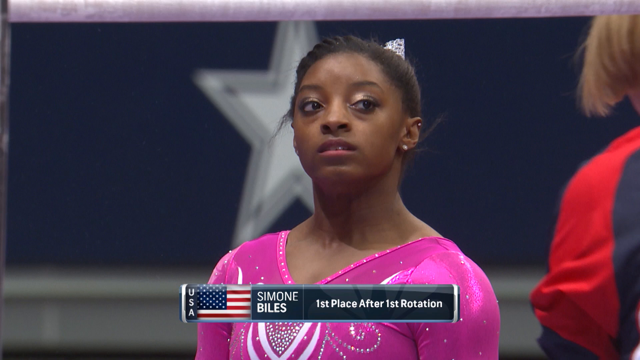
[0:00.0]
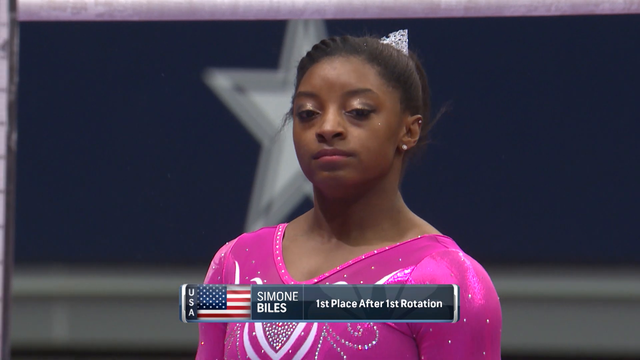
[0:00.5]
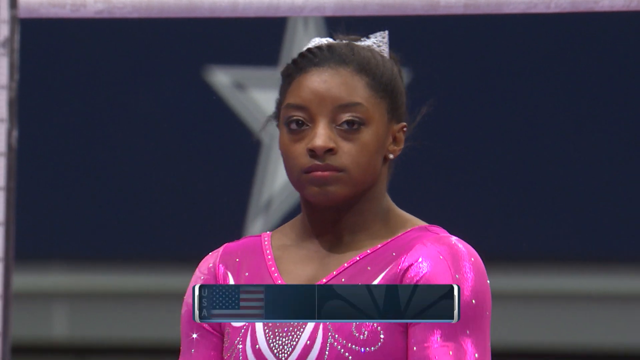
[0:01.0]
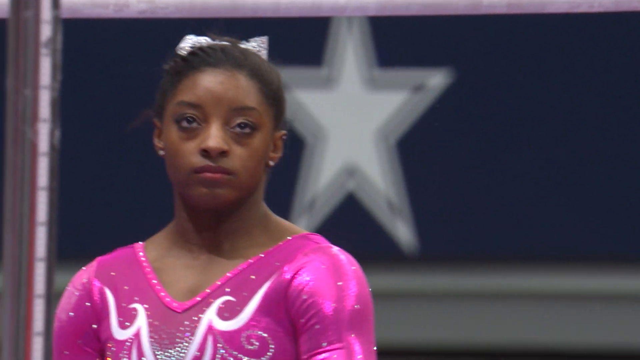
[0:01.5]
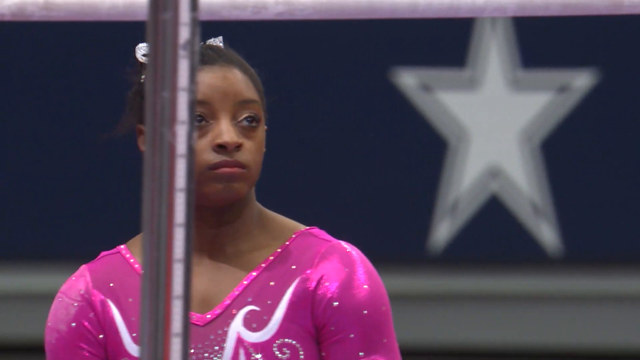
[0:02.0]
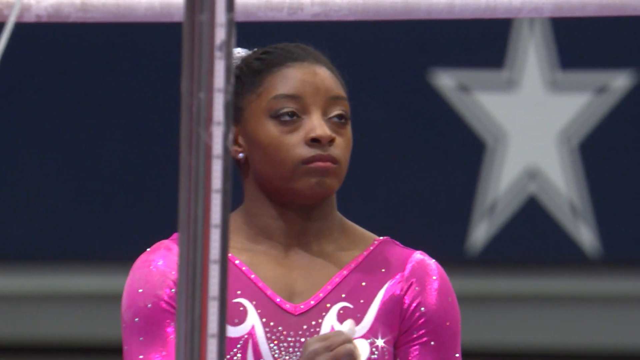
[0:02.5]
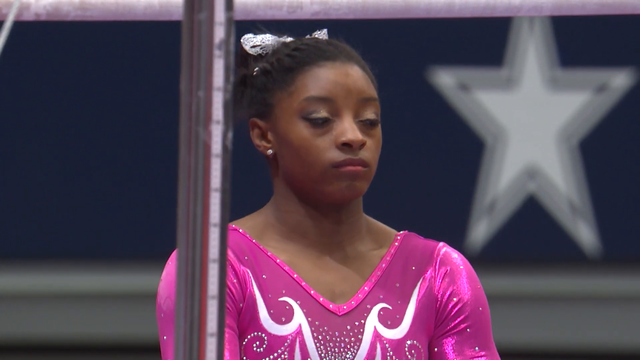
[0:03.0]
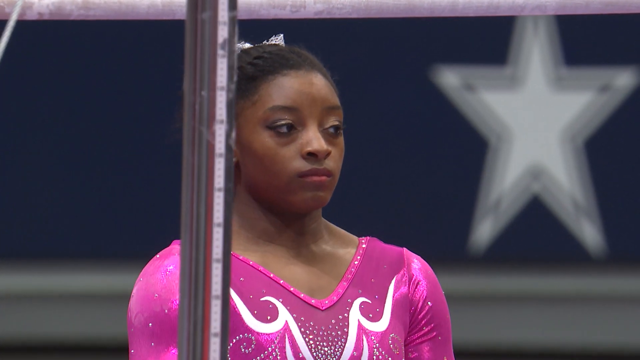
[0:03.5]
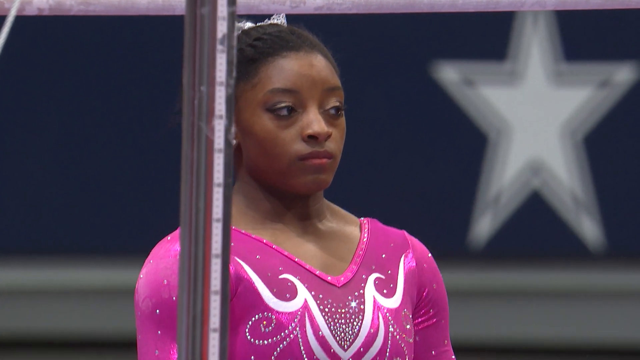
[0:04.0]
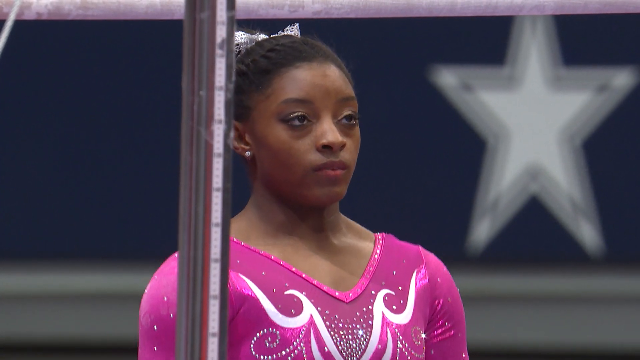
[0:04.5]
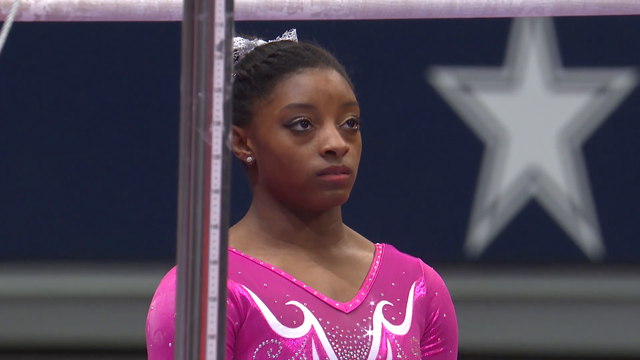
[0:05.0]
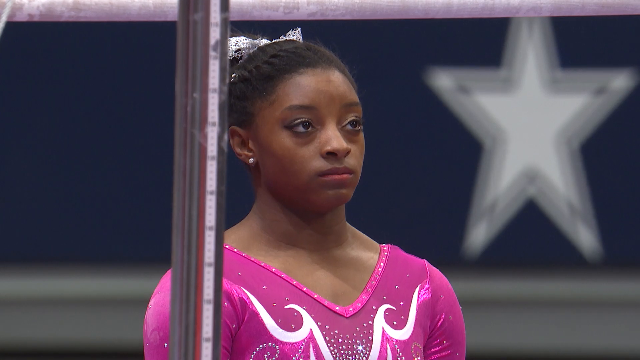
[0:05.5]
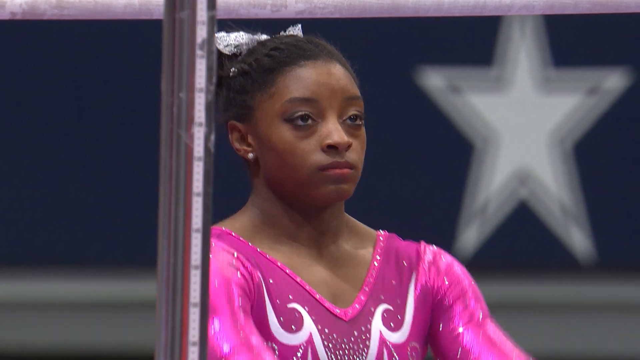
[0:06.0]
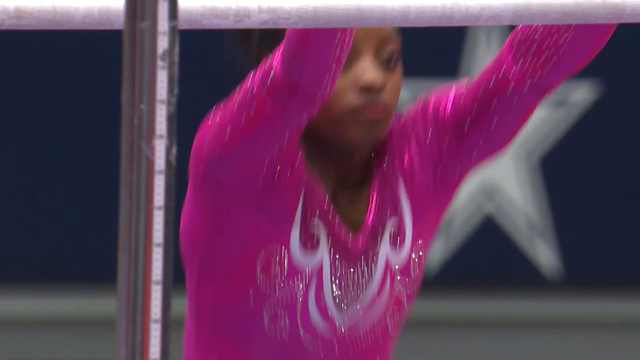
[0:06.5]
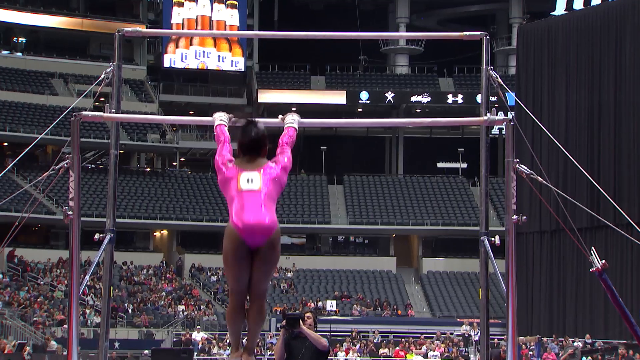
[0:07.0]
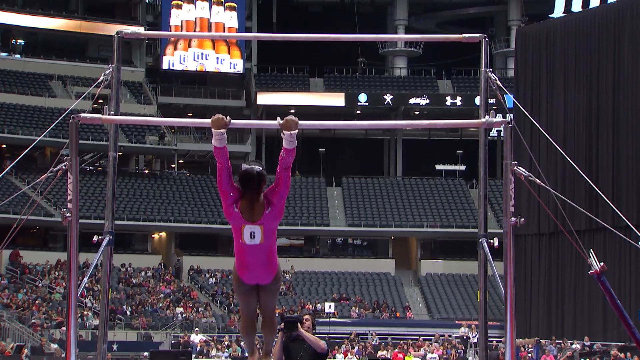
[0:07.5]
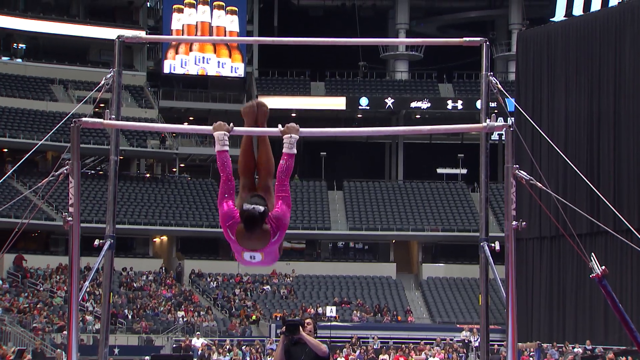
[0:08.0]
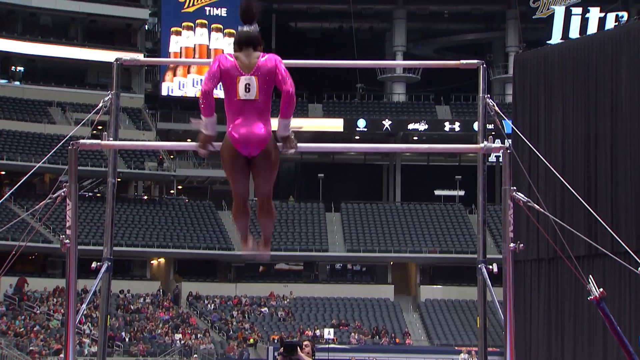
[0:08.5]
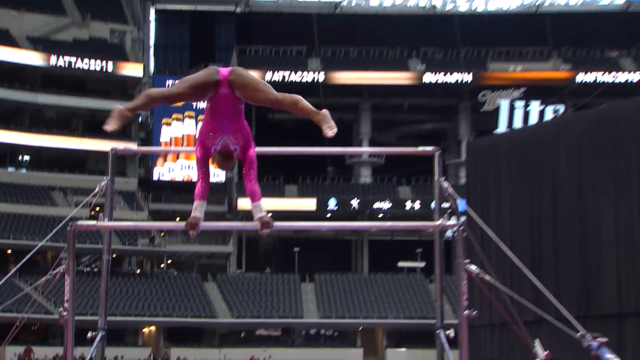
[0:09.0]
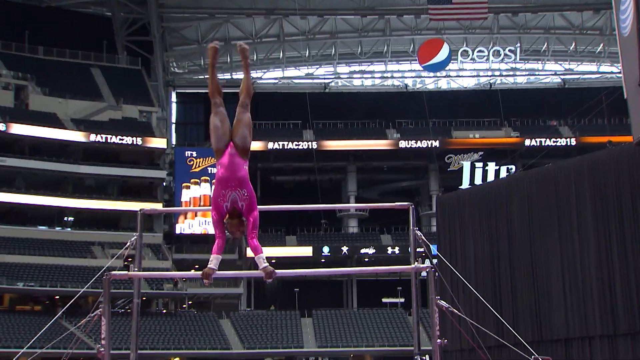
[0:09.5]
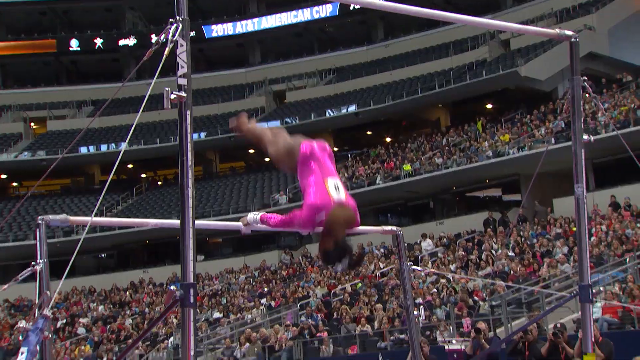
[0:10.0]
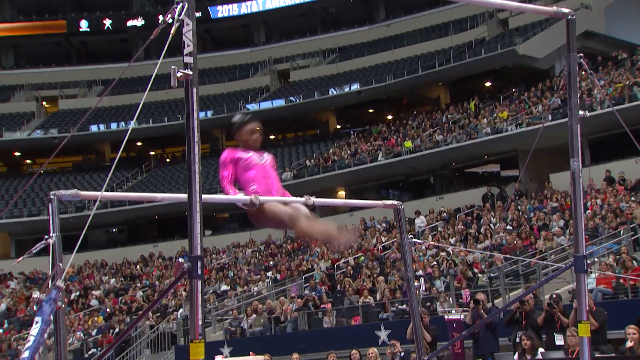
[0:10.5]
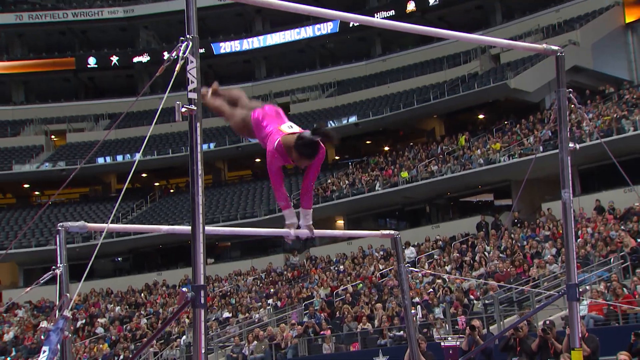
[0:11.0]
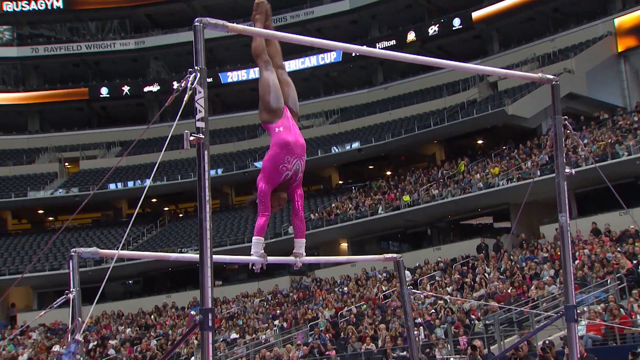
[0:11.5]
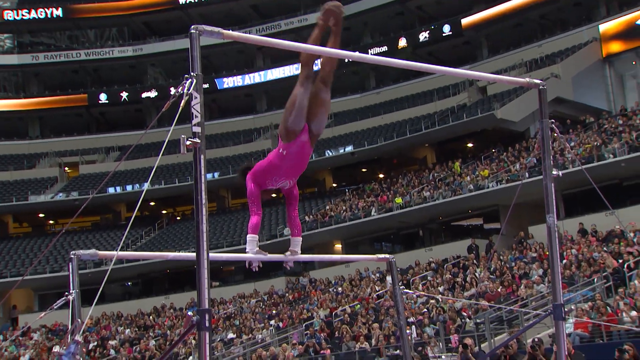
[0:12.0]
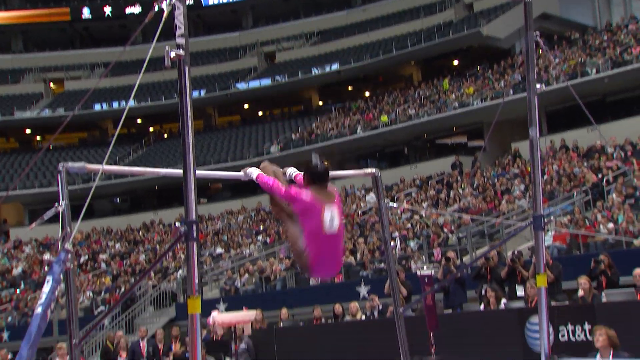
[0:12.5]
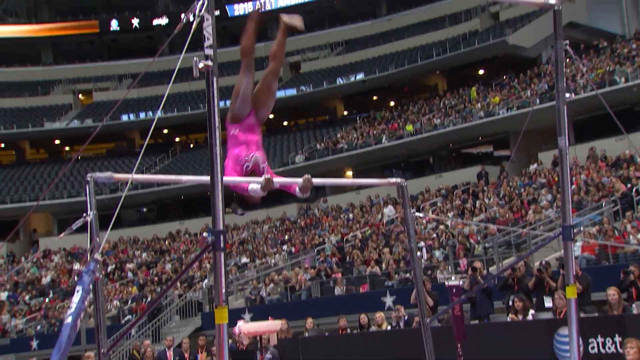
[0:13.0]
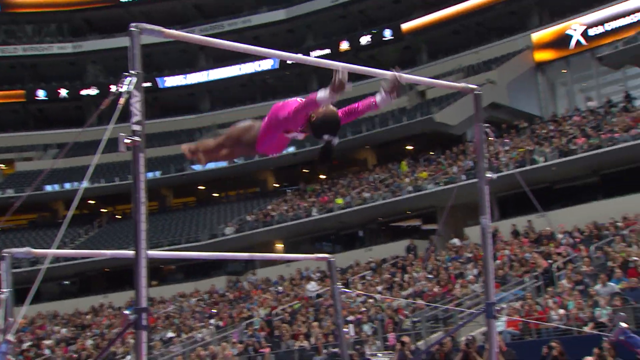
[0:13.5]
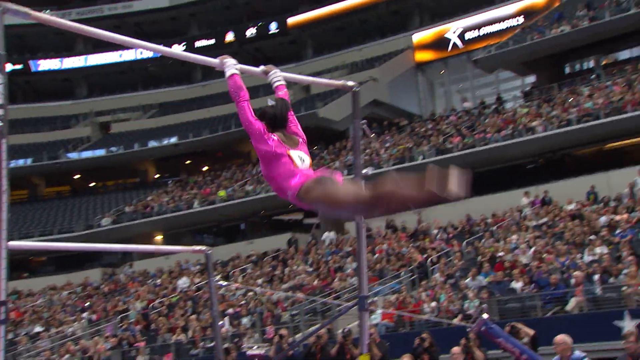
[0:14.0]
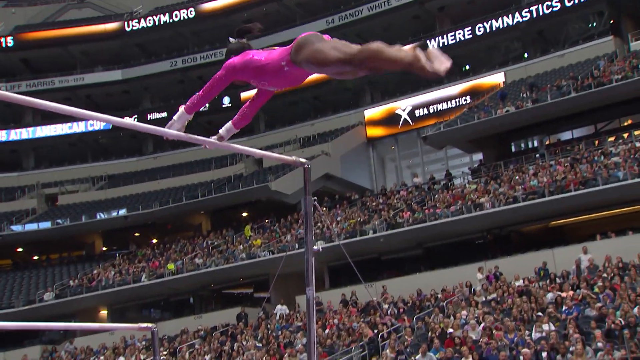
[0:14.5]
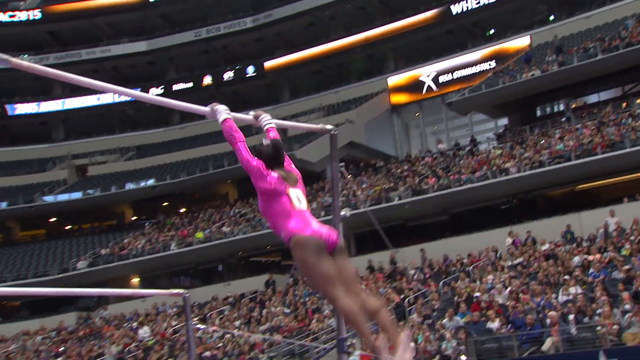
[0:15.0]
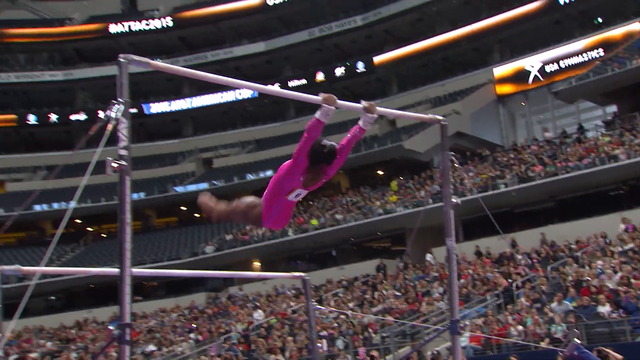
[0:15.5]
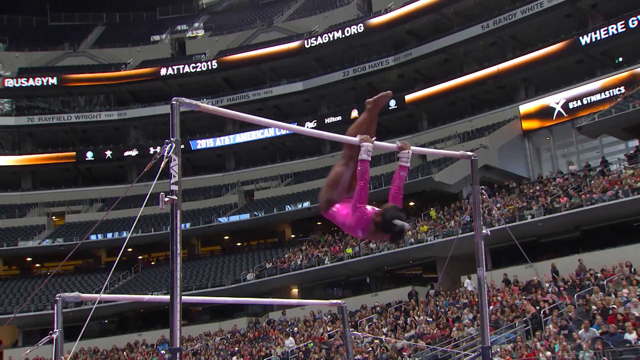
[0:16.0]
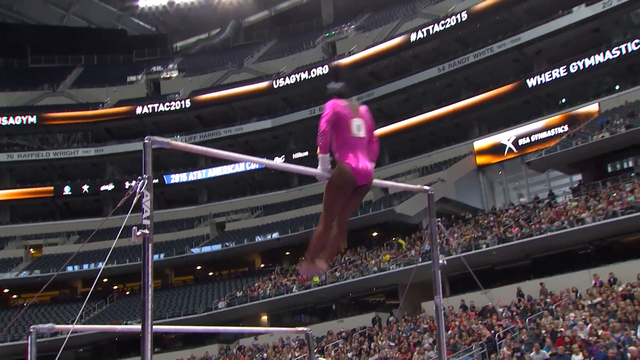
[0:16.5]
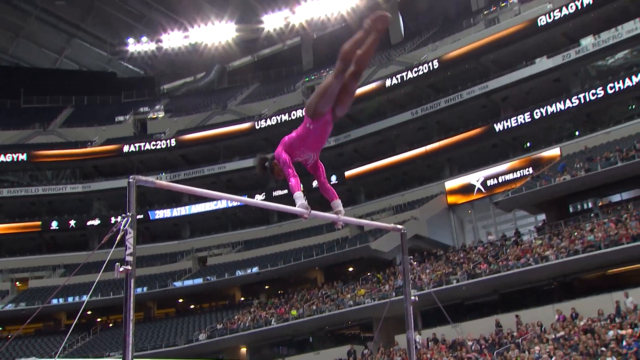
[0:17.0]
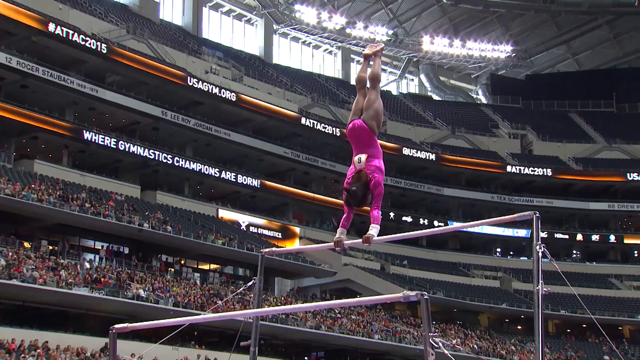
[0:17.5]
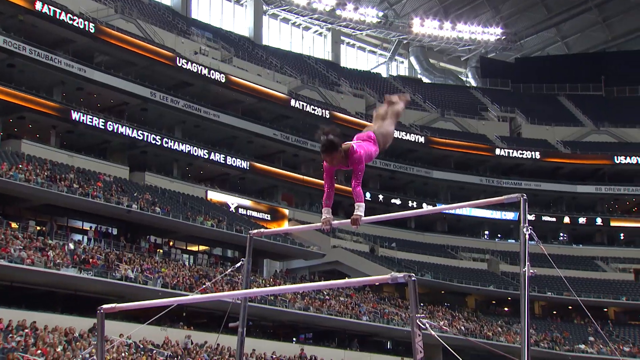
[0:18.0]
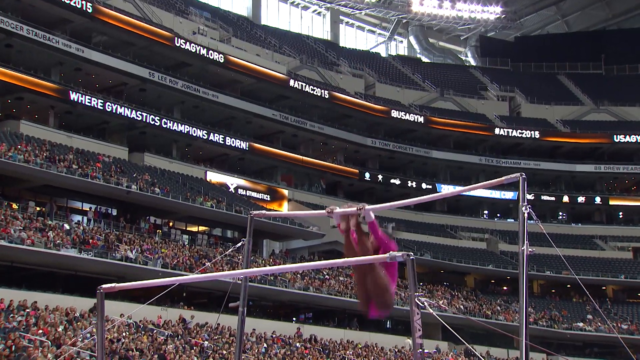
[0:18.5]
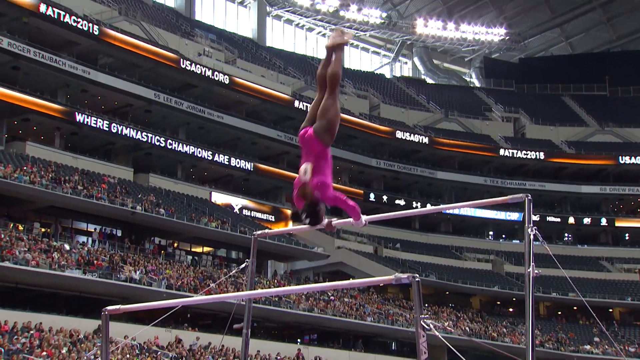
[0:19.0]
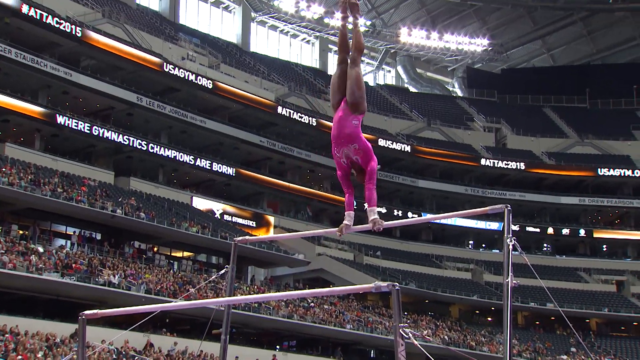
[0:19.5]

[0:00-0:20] A black female gymnast wears a pink suit with a white ribbon in her hair. She appears to have chalk plastered on her palms, feet, and thighs. She appears to be a high-level gymnast, probably a professional, and a lot of people in the stadium are watching her maneuver around the bars she is doing tricks on. A brief title card appears at the start, possibly with her name on it, but it cannot be made out; she is presumably American. She does some sort of somersault maneuver, moving her body around the bar, and then kind of flips and jumps over onto another bar that is higher up, similarly spinning around it.